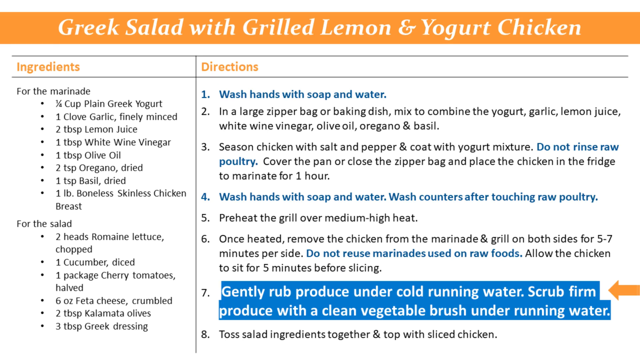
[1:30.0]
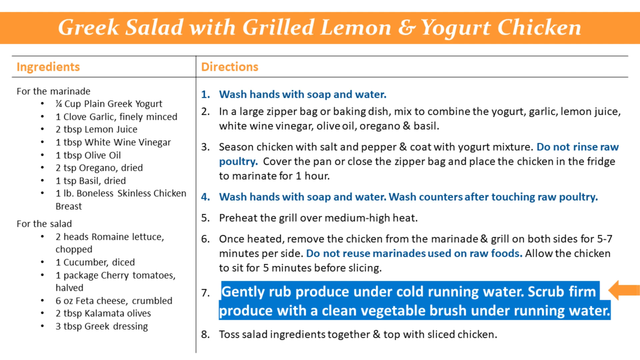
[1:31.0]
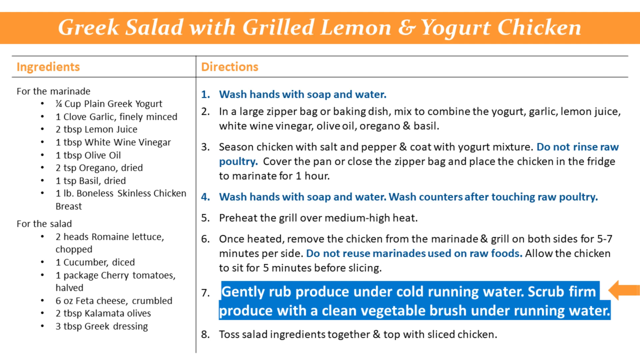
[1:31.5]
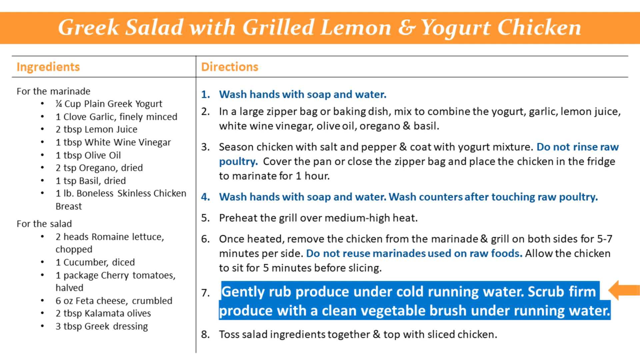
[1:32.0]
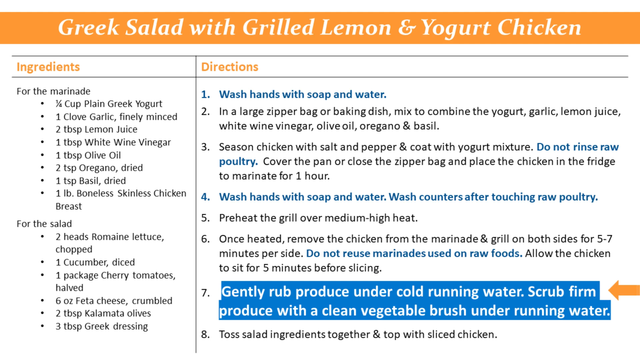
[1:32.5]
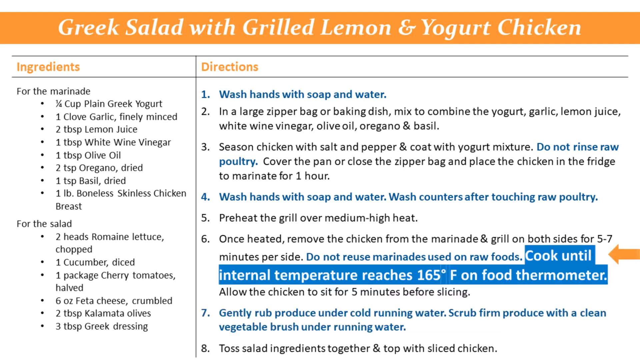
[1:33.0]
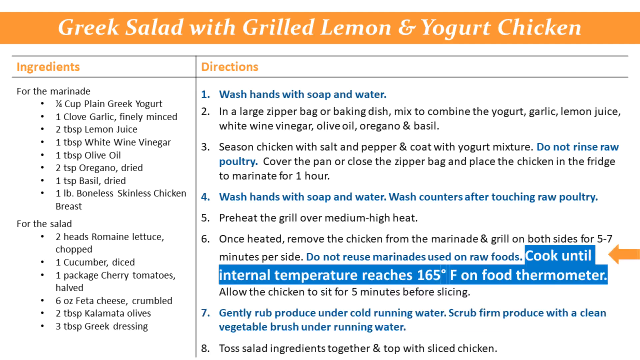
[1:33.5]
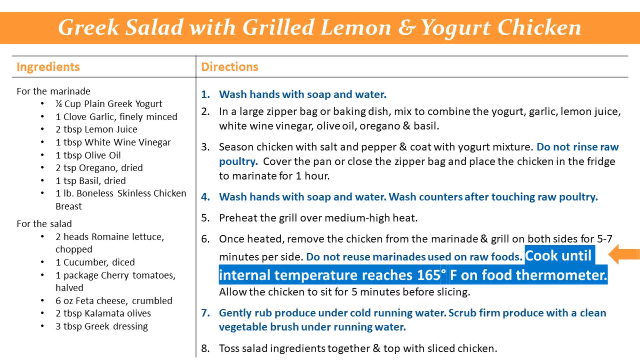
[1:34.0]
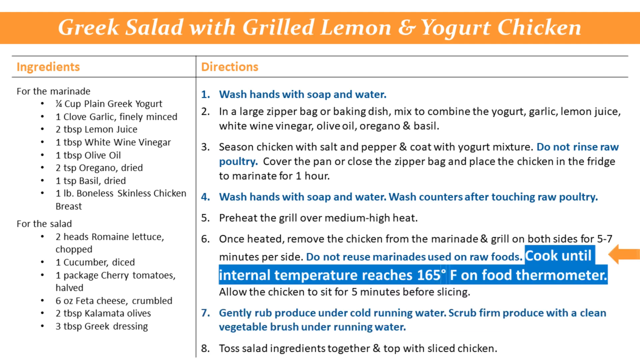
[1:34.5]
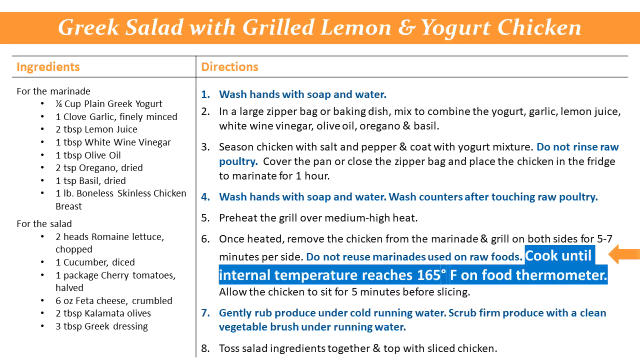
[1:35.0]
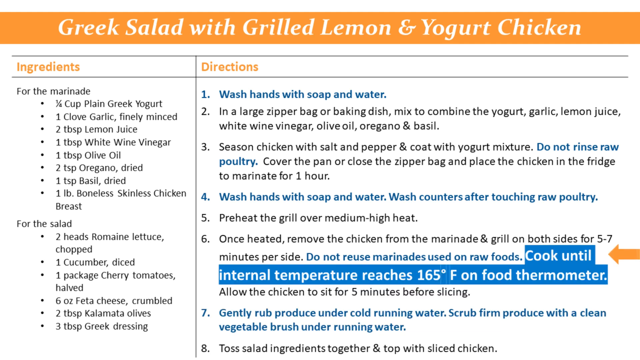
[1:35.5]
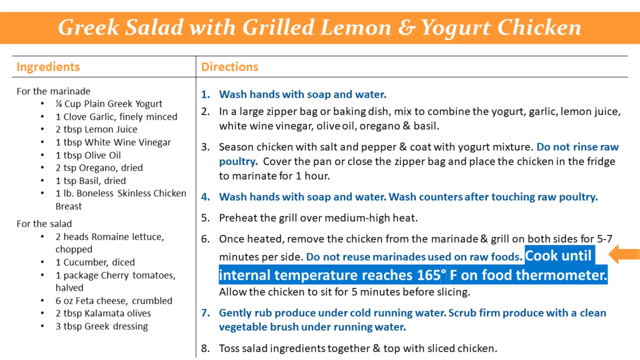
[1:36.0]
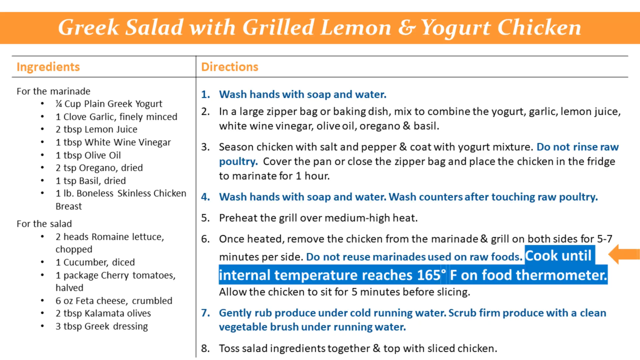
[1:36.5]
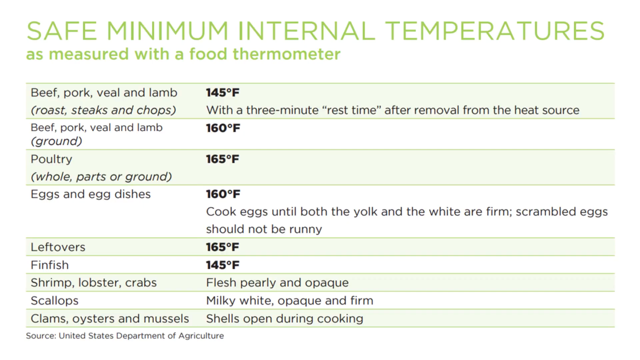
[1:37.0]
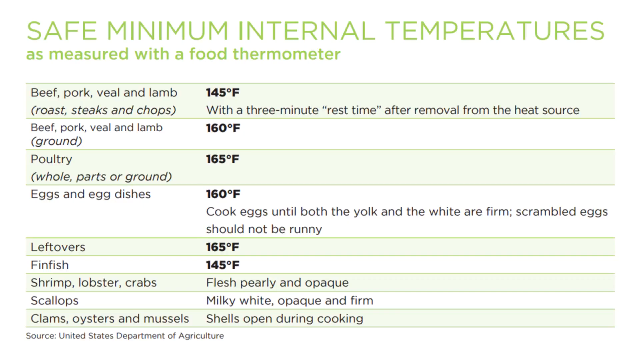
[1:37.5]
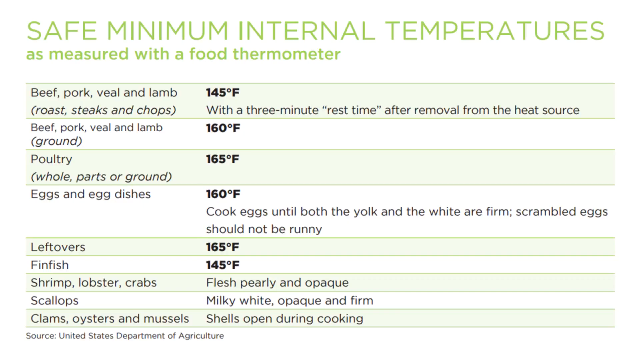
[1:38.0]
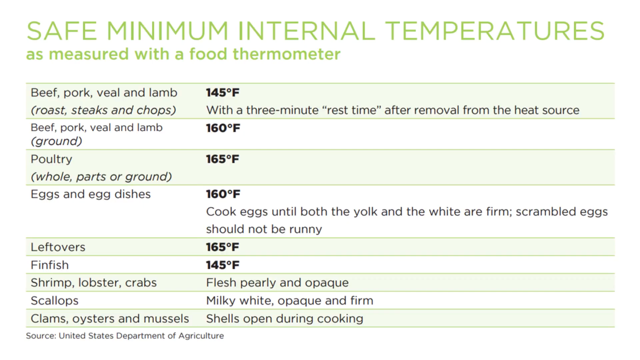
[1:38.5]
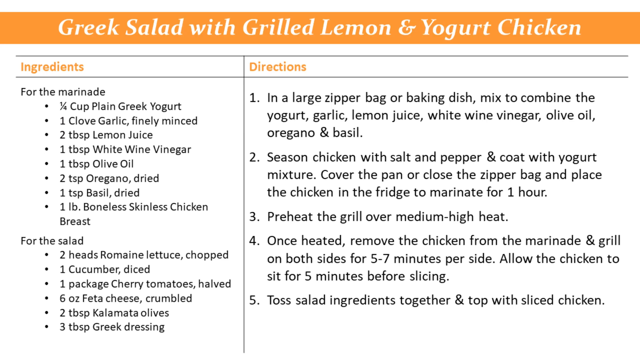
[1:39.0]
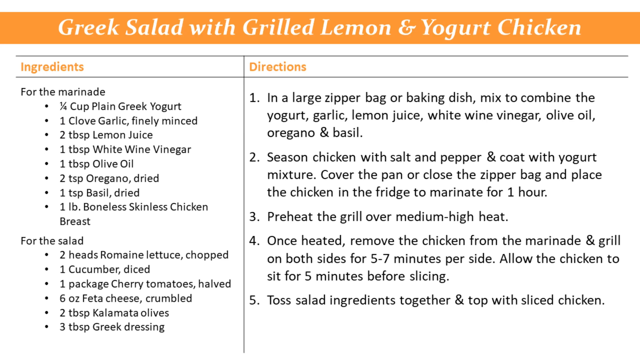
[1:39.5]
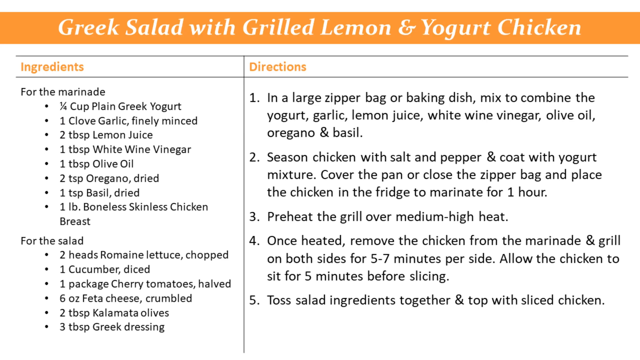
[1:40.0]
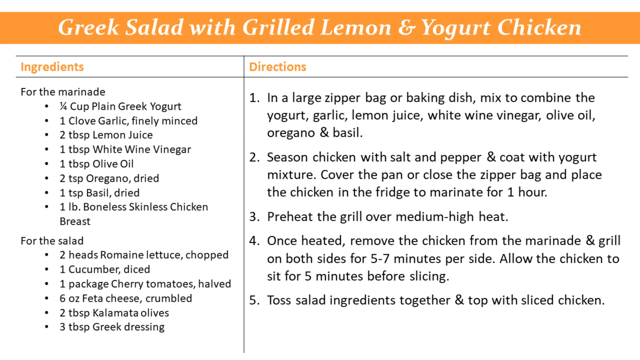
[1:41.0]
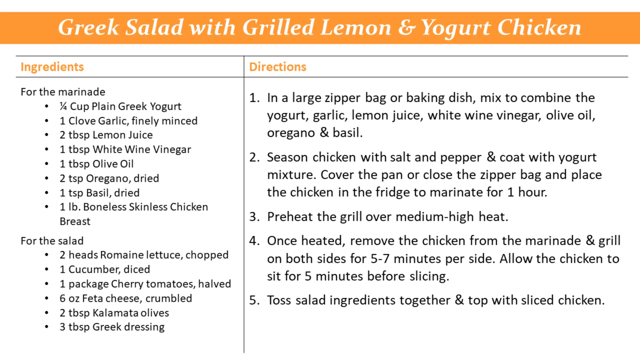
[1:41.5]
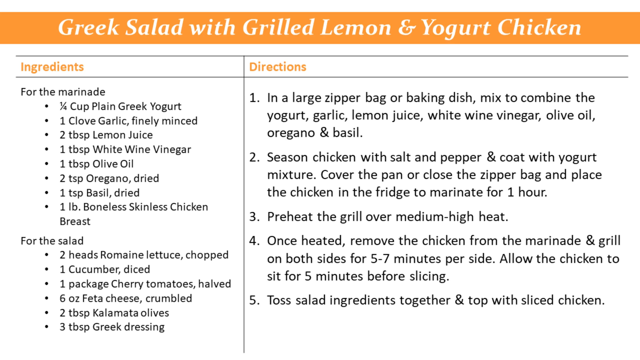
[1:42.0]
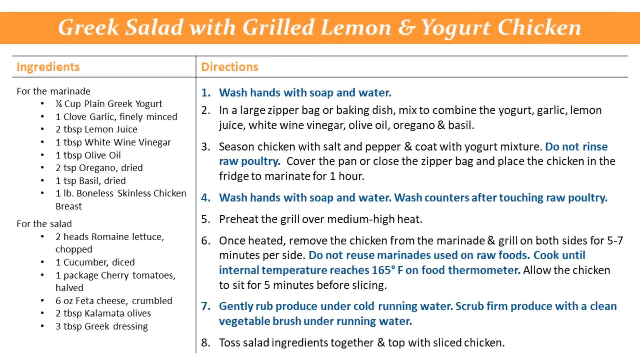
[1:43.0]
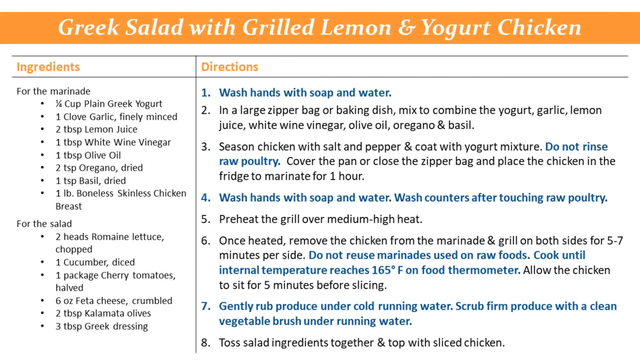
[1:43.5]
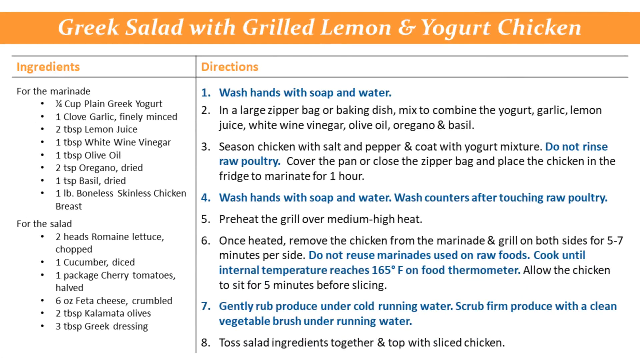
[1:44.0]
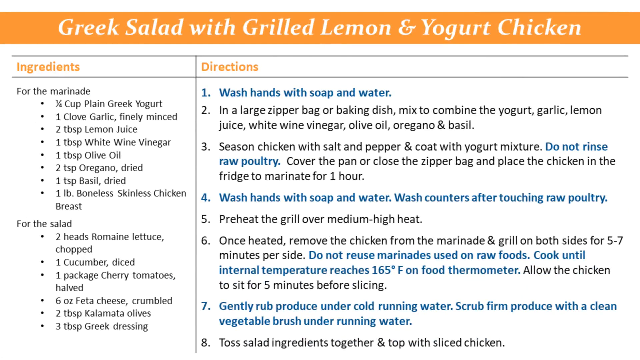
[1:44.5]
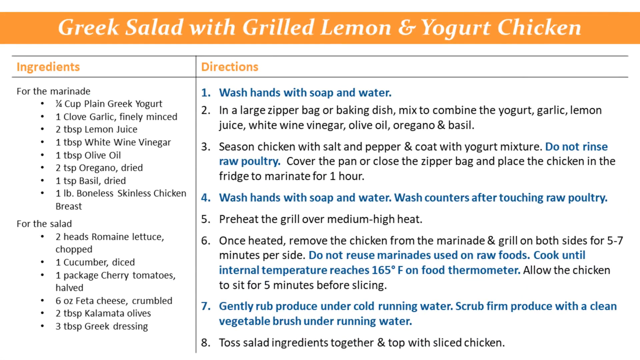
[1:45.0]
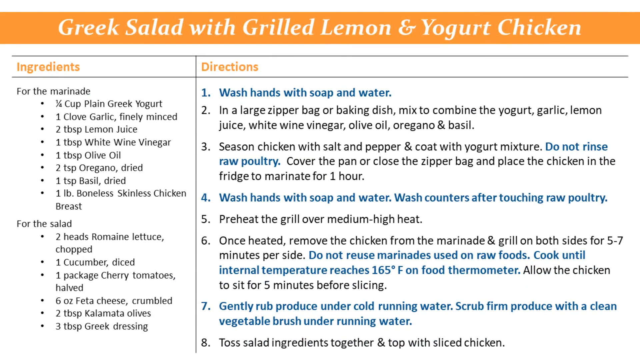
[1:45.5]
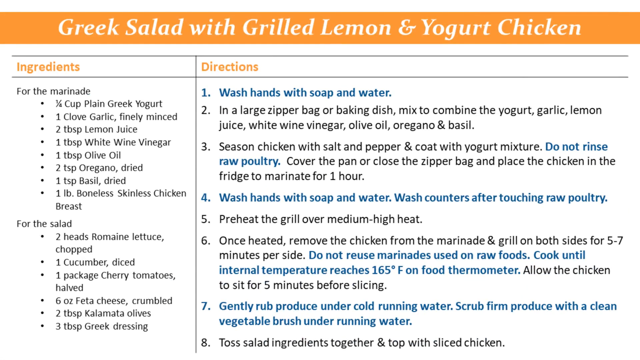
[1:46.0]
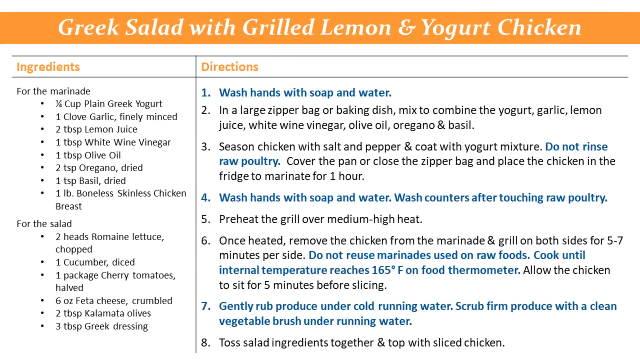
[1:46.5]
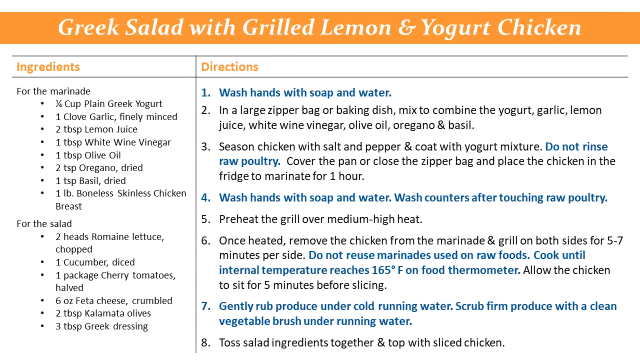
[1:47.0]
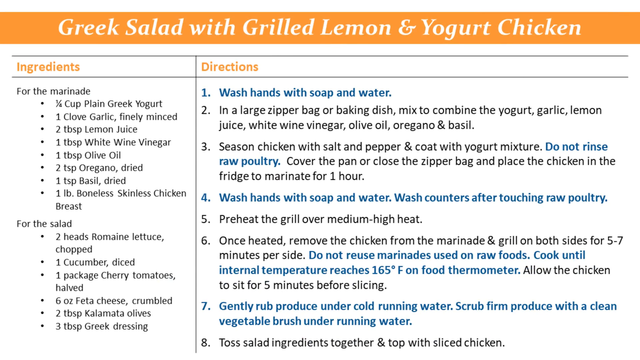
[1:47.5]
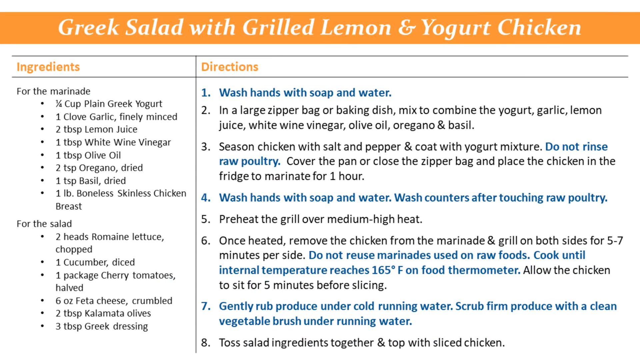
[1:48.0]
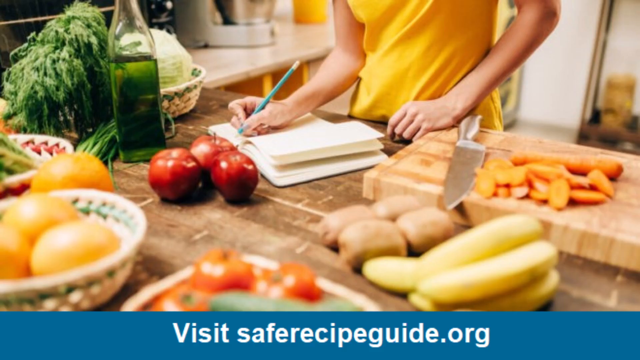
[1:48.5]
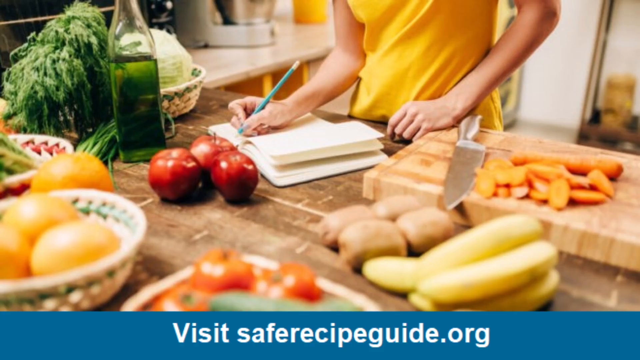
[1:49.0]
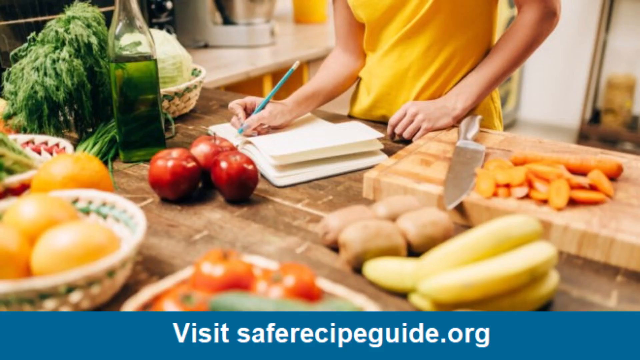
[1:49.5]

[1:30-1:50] A lady has put everything she is going to use on the table and is ready to make her Greek salad with grilled lemon and yogurt chicken.